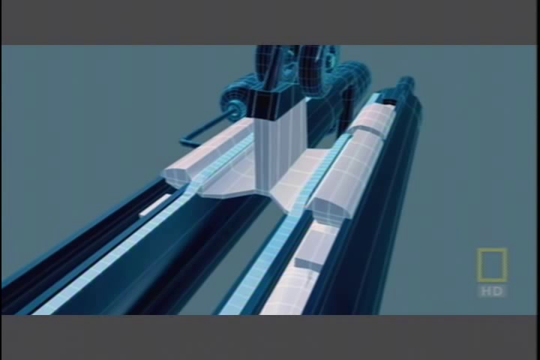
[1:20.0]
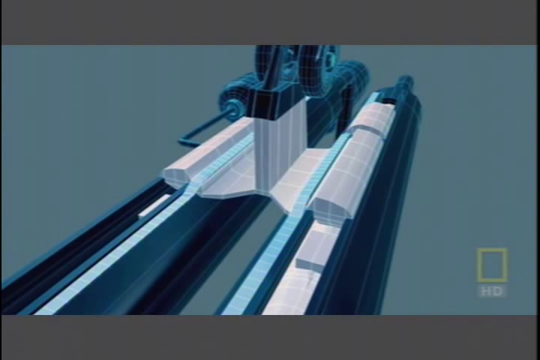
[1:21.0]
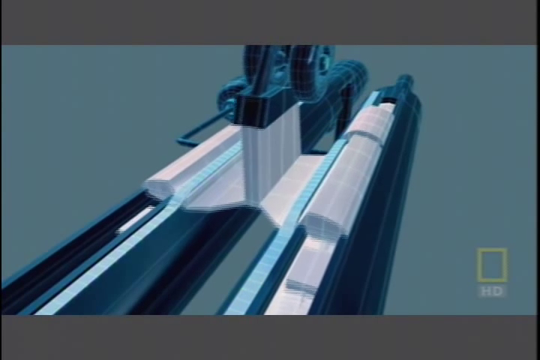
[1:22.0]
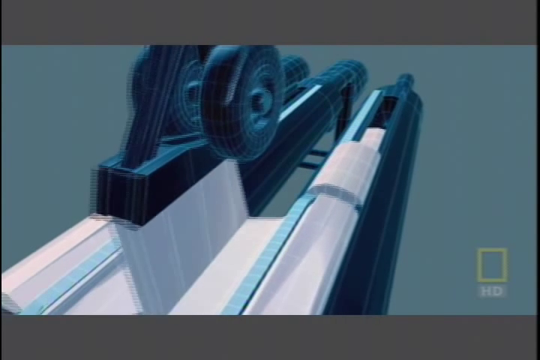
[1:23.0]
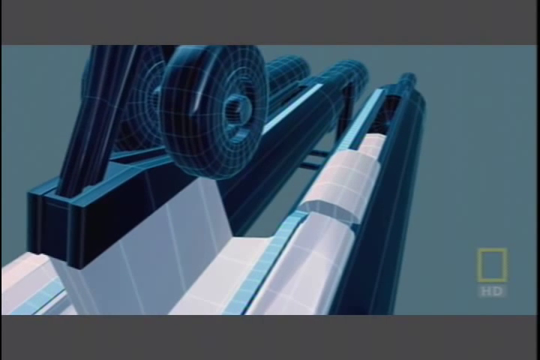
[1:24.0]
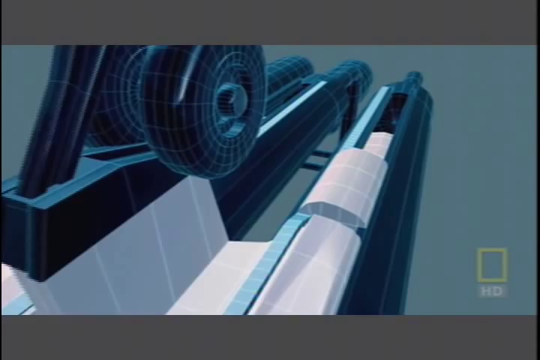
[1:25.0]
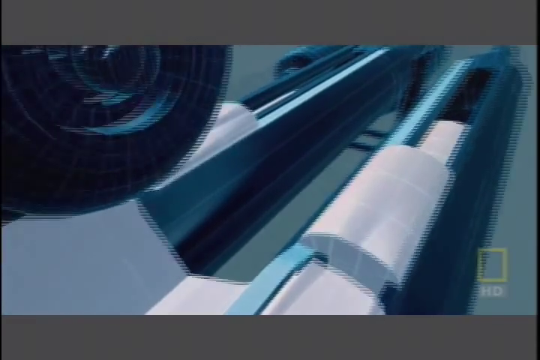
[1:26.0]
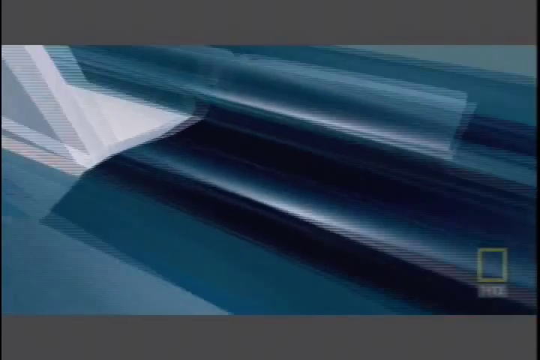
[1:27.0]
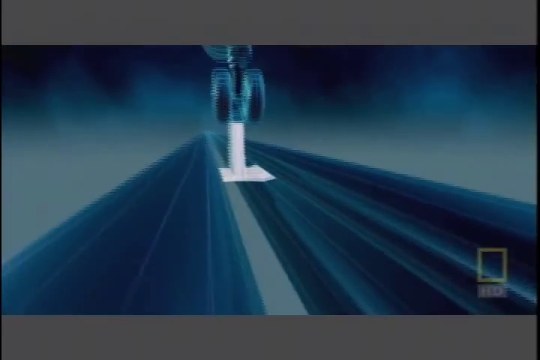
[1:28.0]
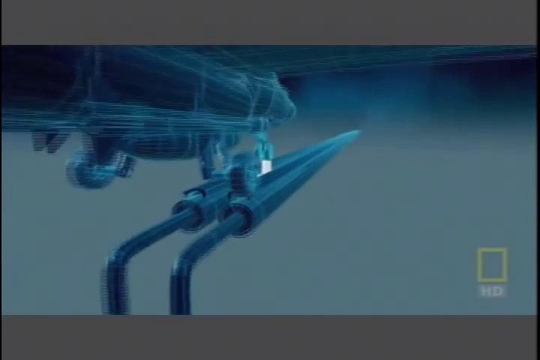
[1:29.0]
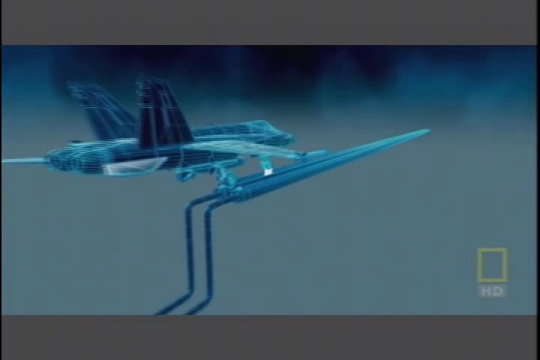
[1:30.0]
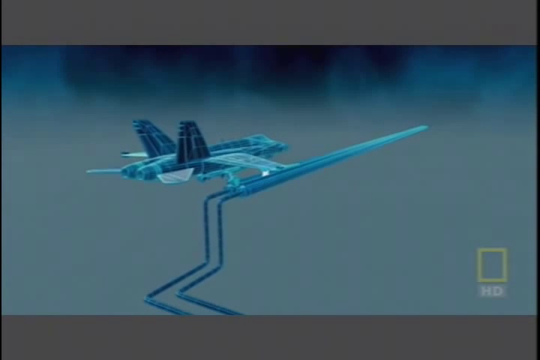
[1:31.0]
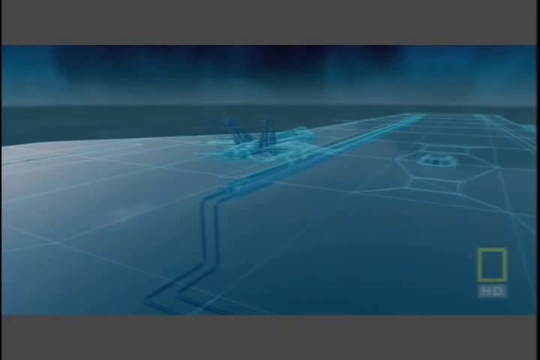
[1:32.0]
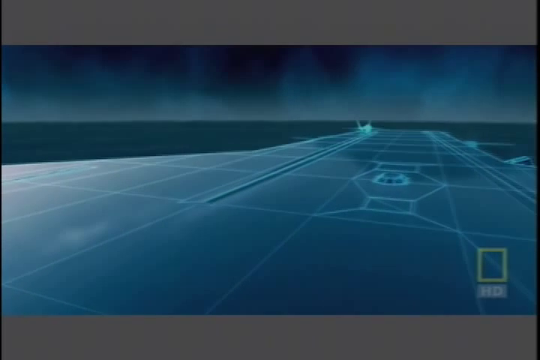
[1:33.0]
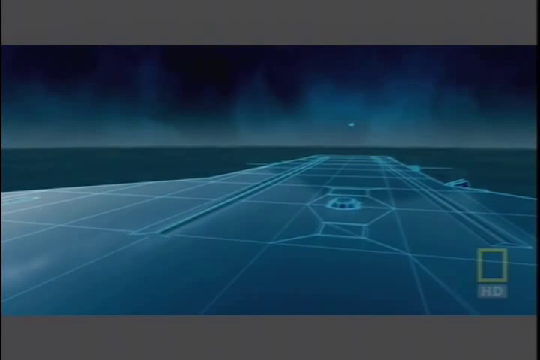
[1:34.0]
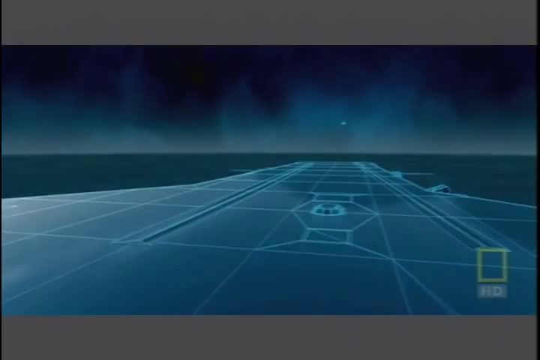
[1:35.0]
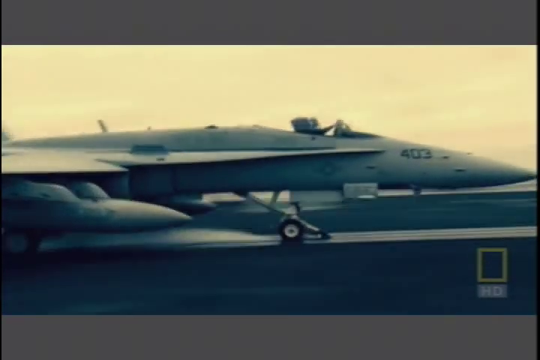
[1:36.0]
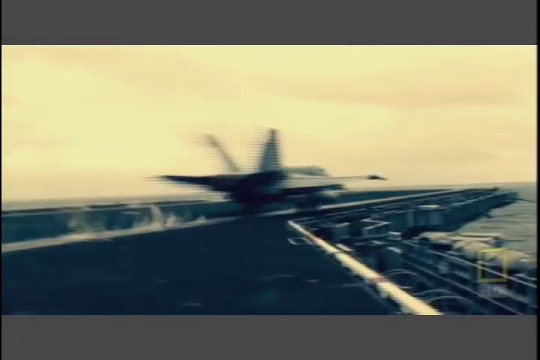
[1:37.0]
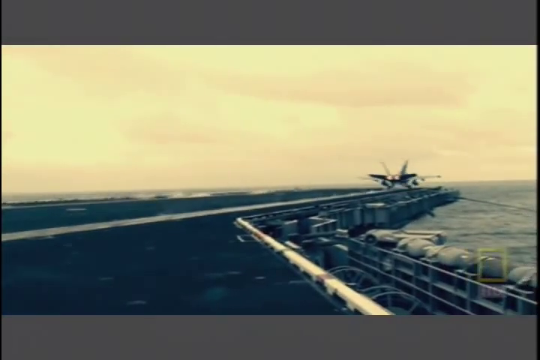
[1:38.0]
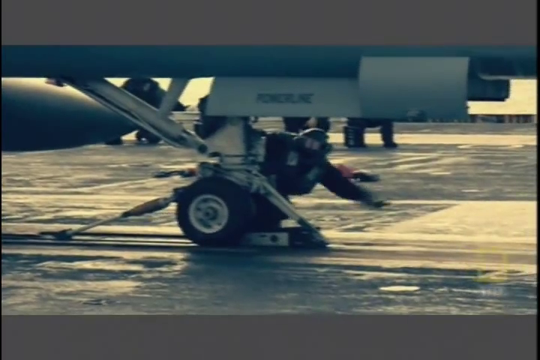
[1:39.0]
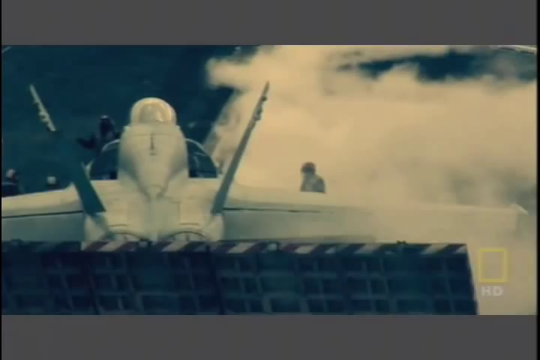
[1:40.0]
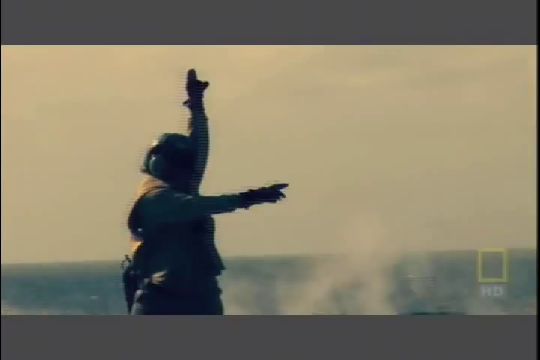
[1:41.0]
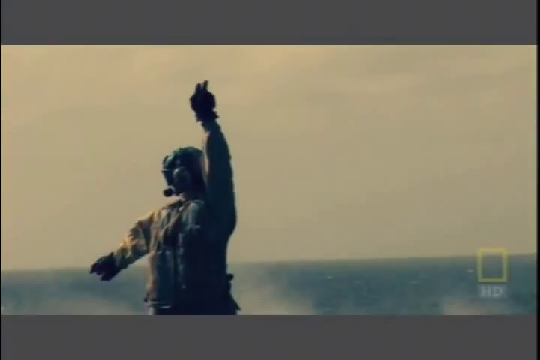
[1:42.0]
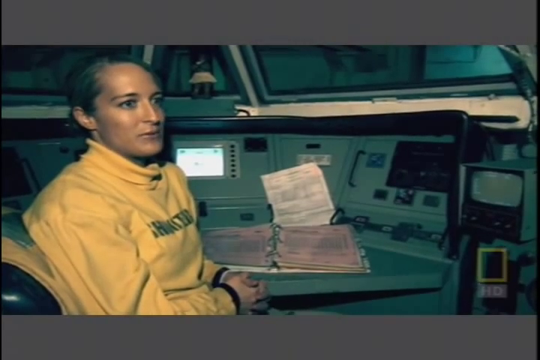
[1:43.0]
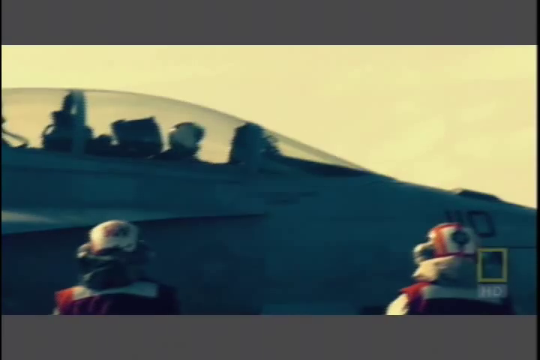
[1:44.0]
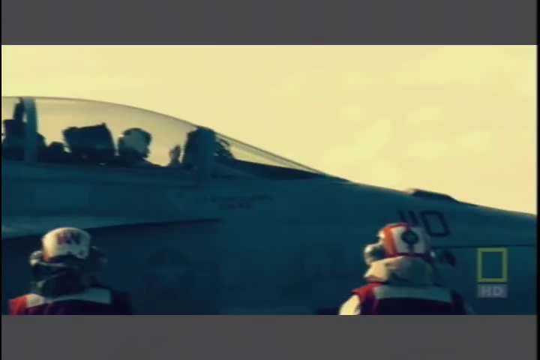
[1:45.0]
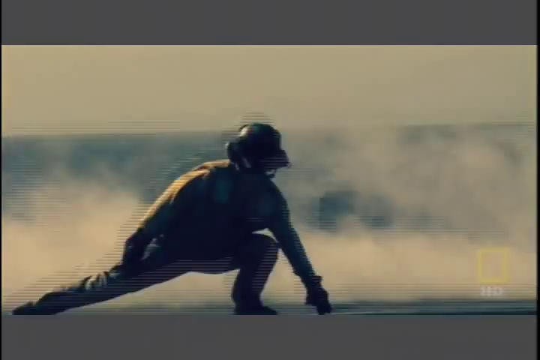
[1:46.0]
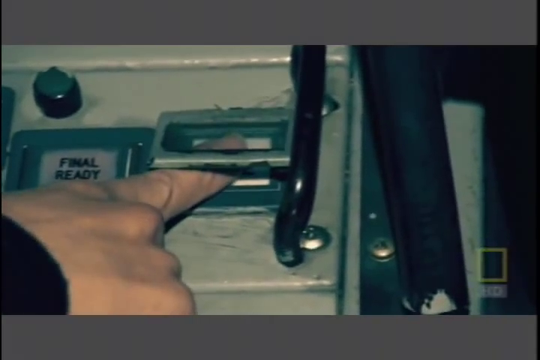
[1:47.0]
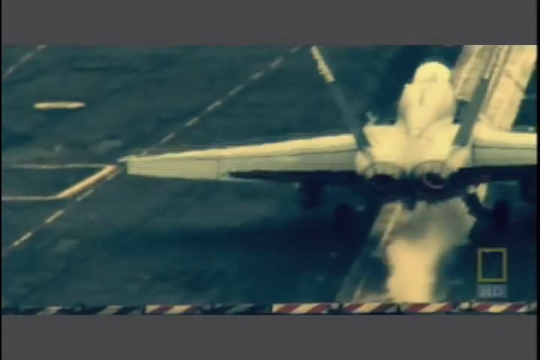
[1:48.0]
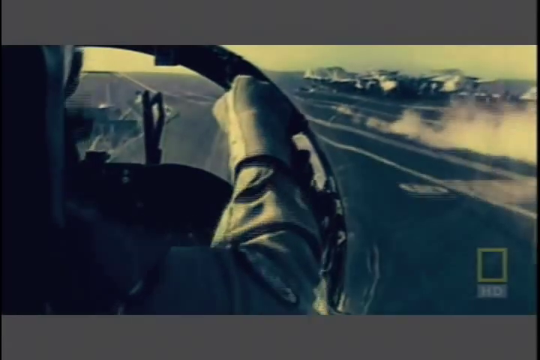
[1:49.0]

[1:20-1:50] A graphical design and animation illustrates the mechanics of the take-off structure on an aircraft carrier. The camera pans in to the structure, which looks like two pipes with a groove in between, with the aircraft's front wheel resting securely on it. The camera pans in closer and shows the aircraft's rear wheel on the structure, and the length of the structure seems to run far ahead. The ocean and the aircraft carrier itself are not visible, only the aircraft and the metal structure built into the deck. The animated aircraft takes off. The entire animation, including the sky, is in blue and grey. Next comes actual footage of an aircraft carrier takeoff, in dull grey shades. A man leans beside the wheel of an aircraft about to take off, and personnel on deck give hand signals, one hand lifted up and the other pointed sideways, to guide the airplane. A woman in a turtleneck outfit speaks in her compartment inside the aircraft carrier. Lastly, as an aircraft is about to take off, the aircraft controller gets into position with one knee bent and a hand pointed forward to signal the pilot to take off. A person's hand presses a button in a compartment as the aircraft takes off from the deck, seen from the pilot's viewpoint.